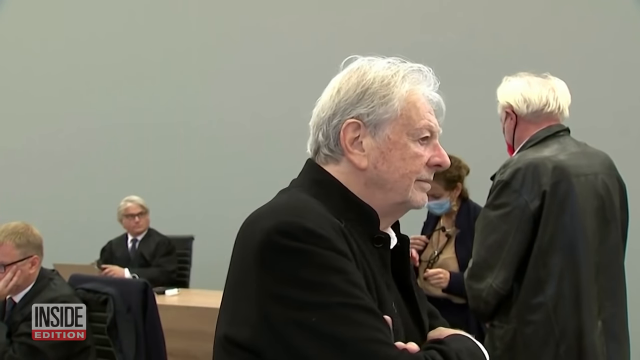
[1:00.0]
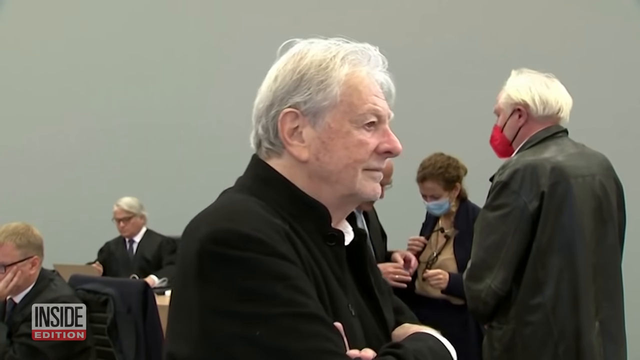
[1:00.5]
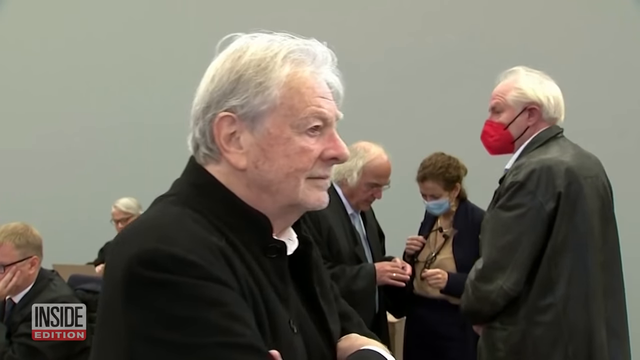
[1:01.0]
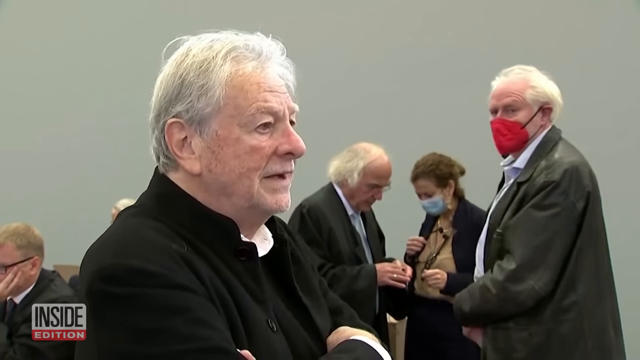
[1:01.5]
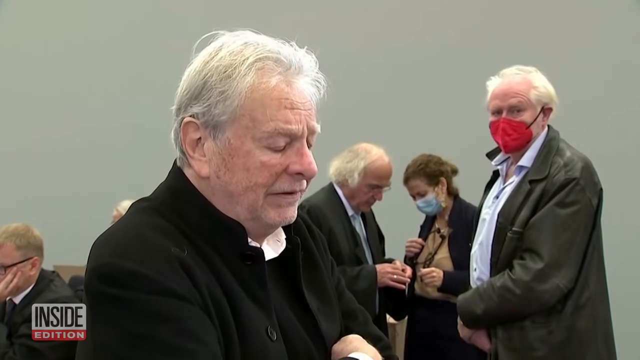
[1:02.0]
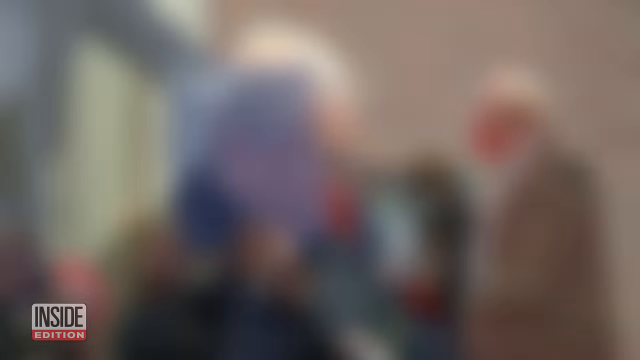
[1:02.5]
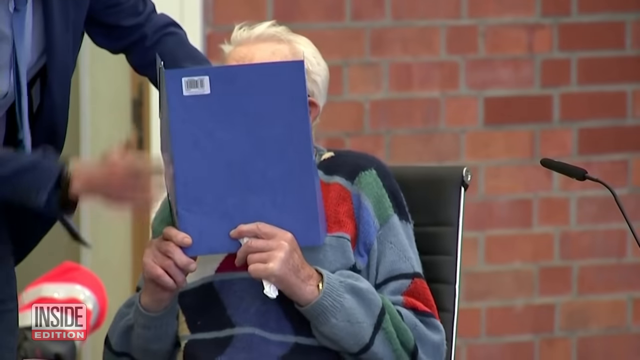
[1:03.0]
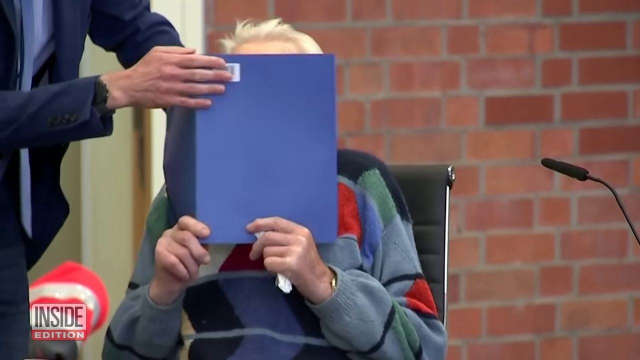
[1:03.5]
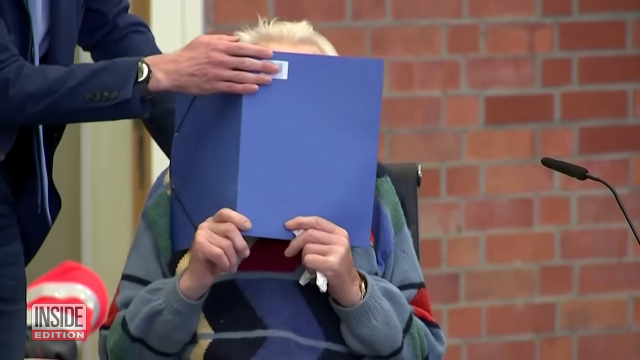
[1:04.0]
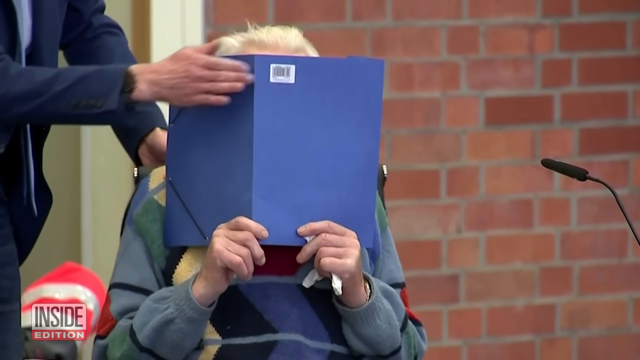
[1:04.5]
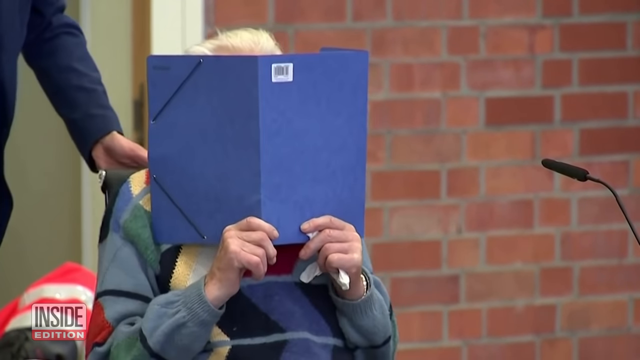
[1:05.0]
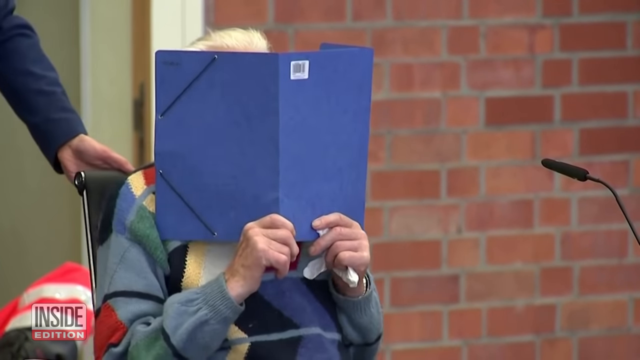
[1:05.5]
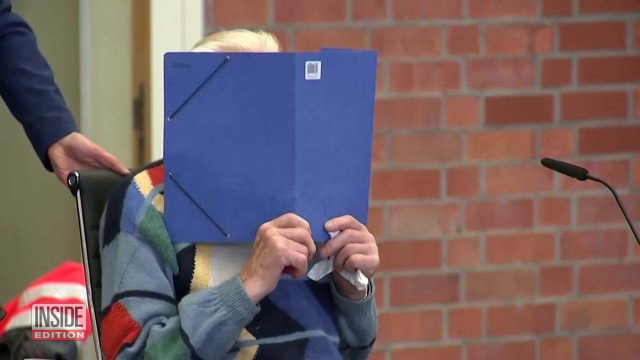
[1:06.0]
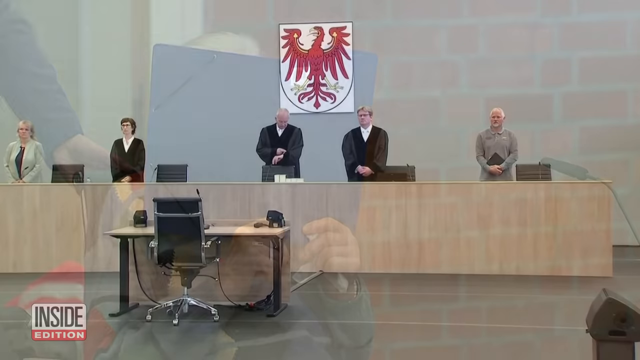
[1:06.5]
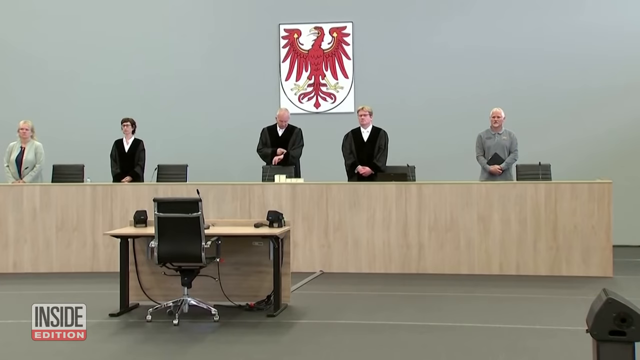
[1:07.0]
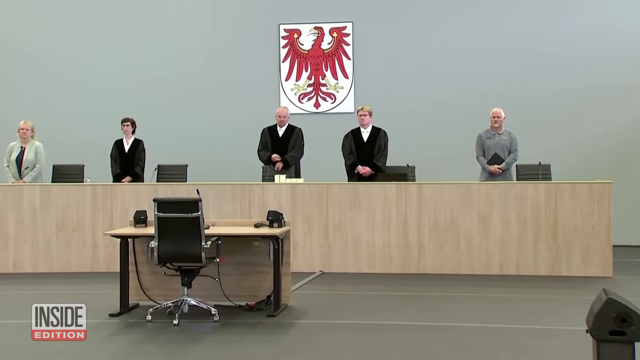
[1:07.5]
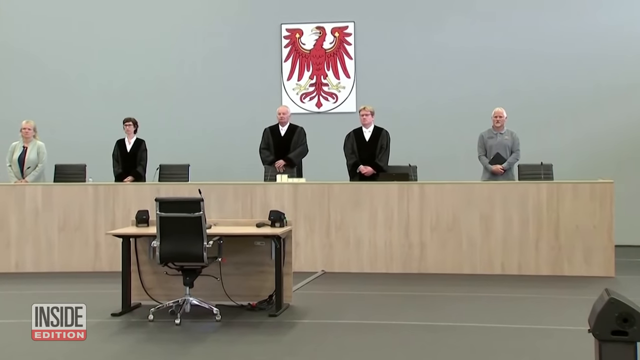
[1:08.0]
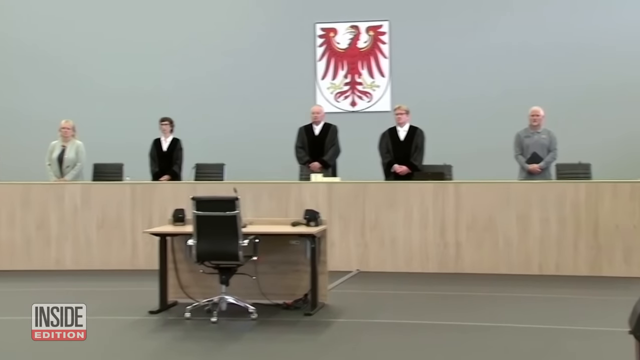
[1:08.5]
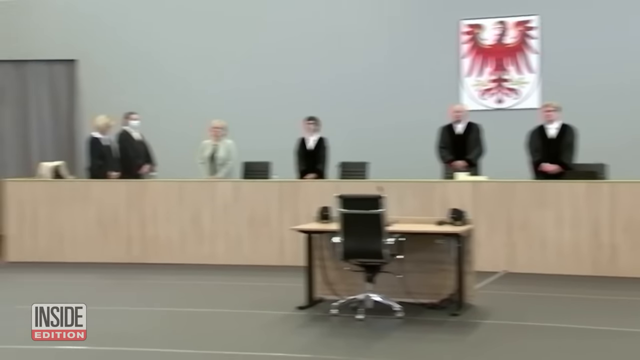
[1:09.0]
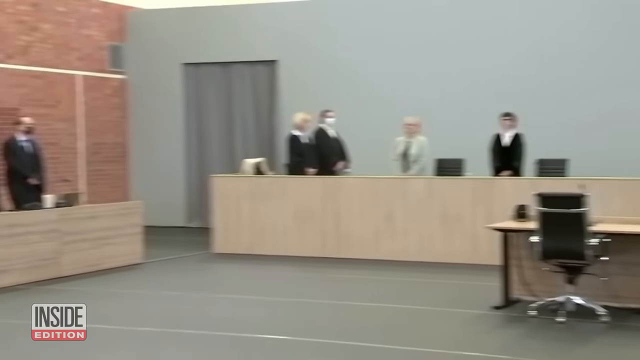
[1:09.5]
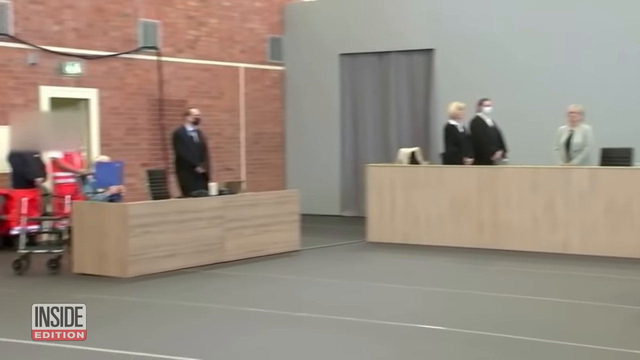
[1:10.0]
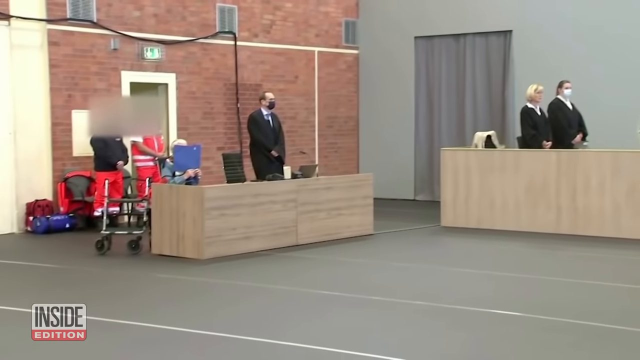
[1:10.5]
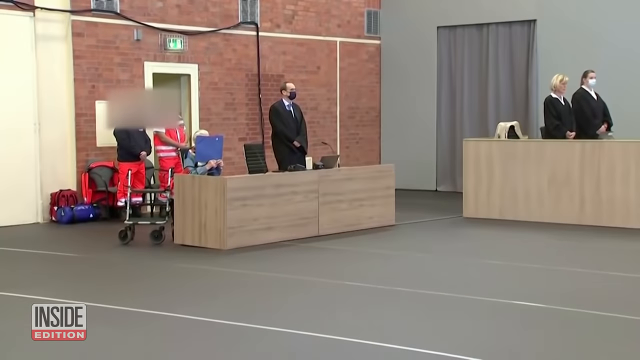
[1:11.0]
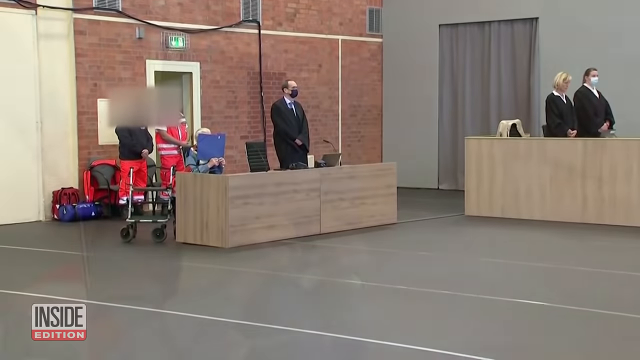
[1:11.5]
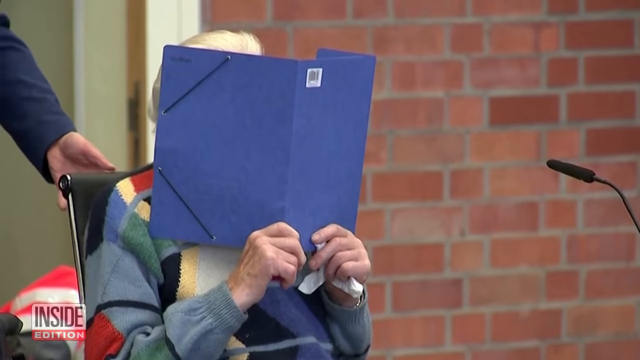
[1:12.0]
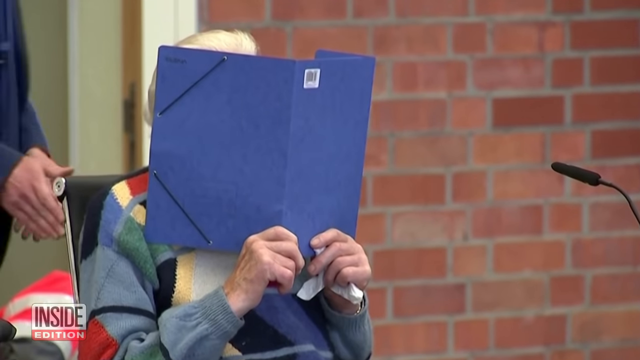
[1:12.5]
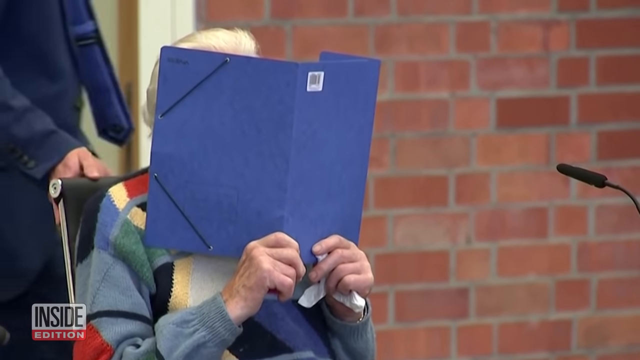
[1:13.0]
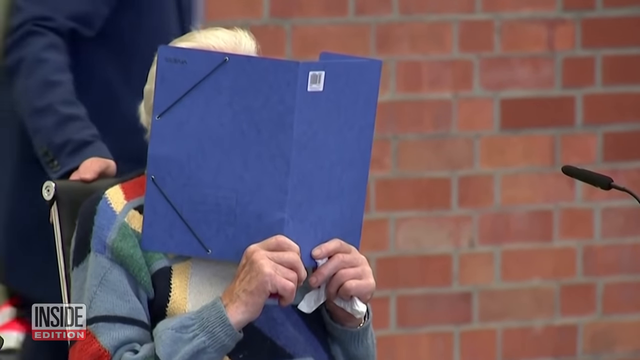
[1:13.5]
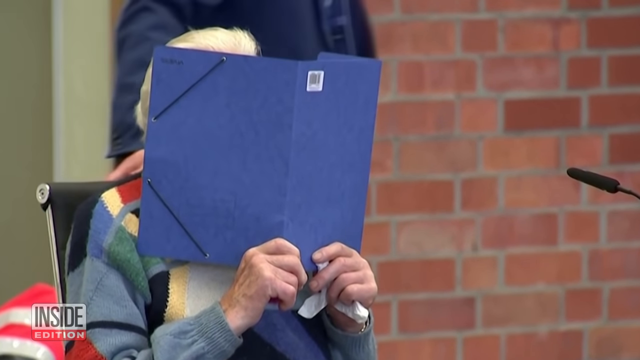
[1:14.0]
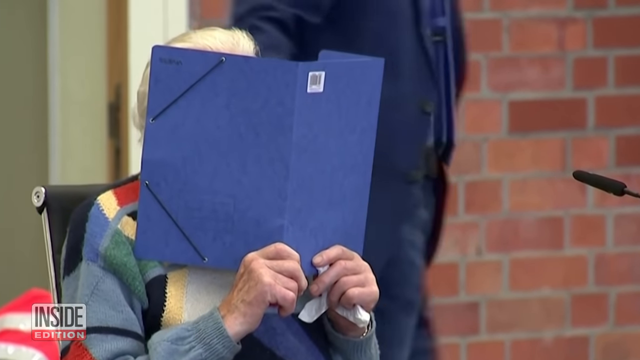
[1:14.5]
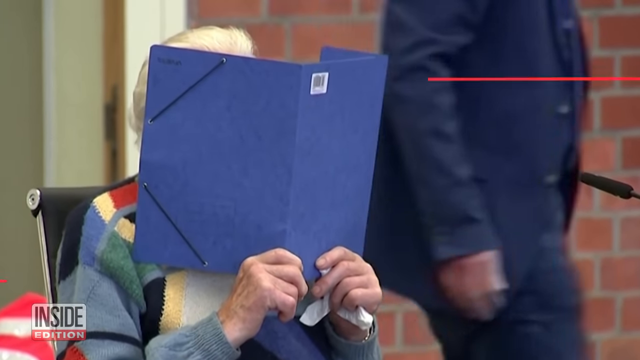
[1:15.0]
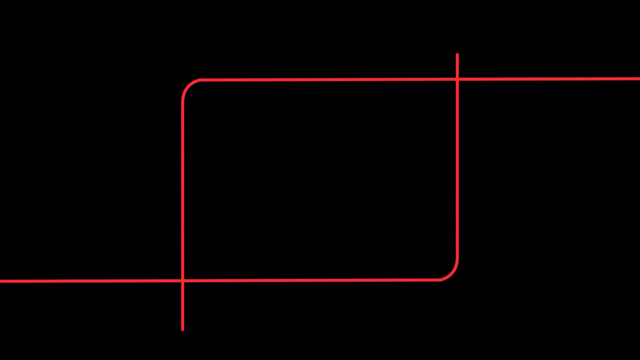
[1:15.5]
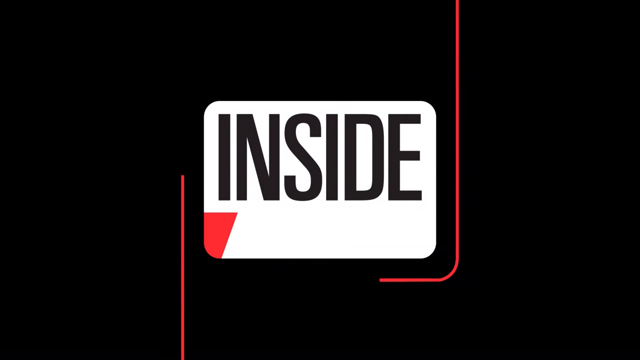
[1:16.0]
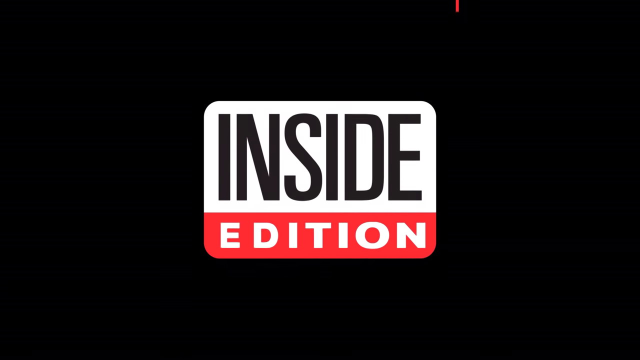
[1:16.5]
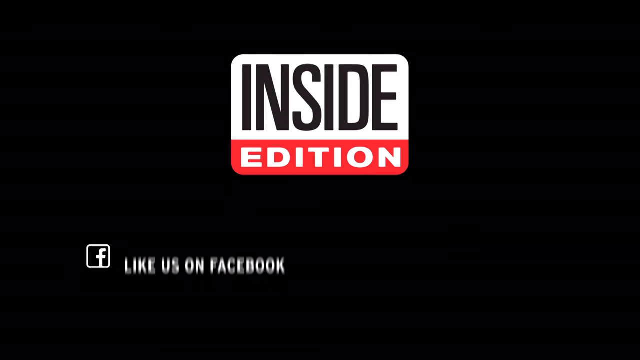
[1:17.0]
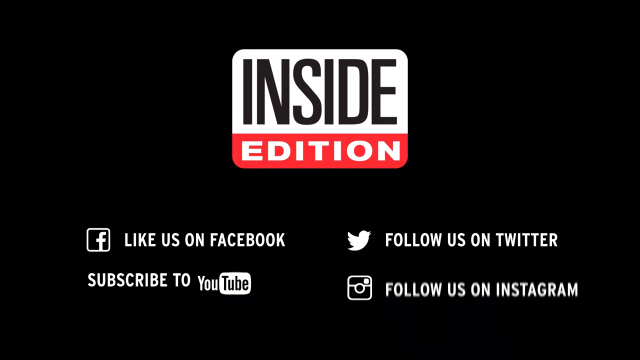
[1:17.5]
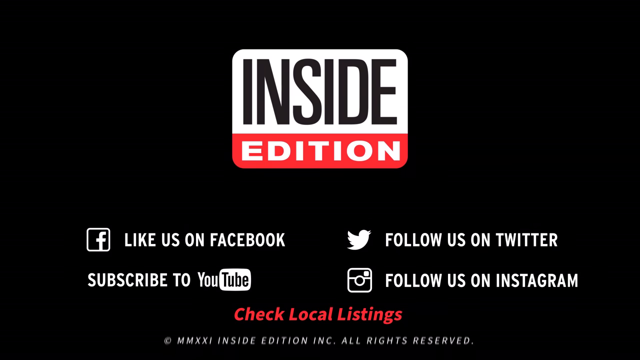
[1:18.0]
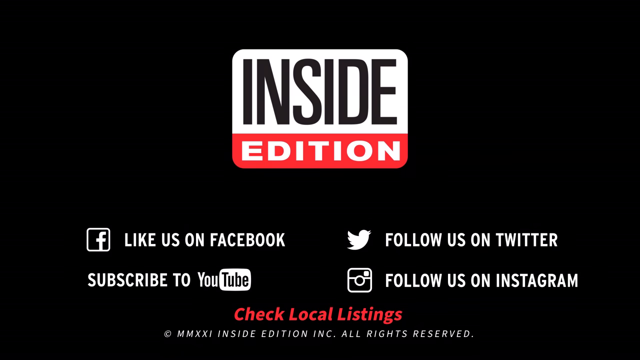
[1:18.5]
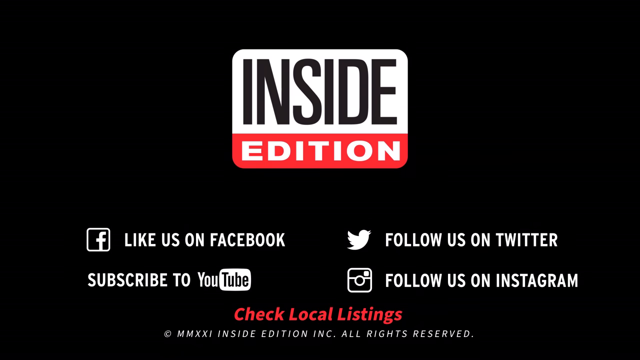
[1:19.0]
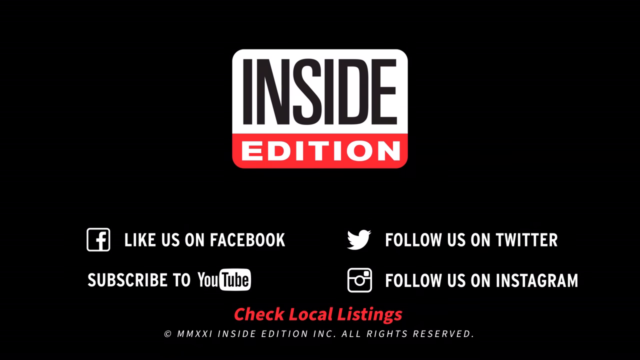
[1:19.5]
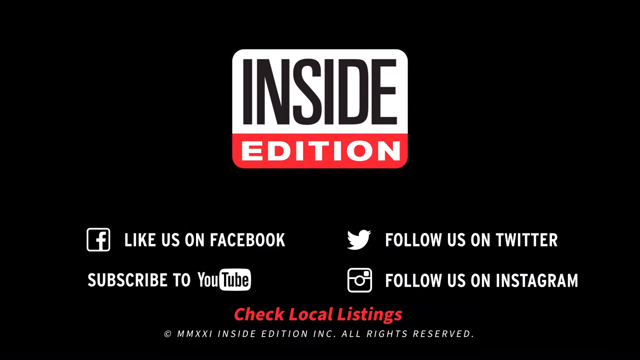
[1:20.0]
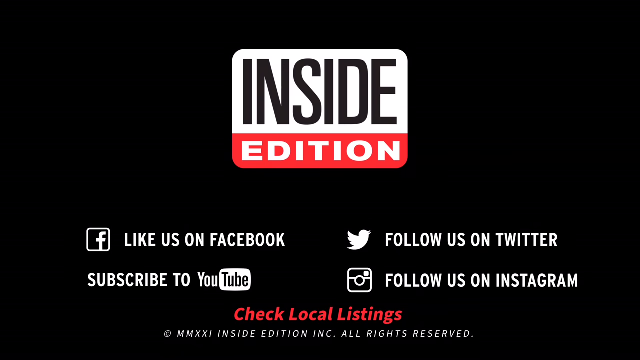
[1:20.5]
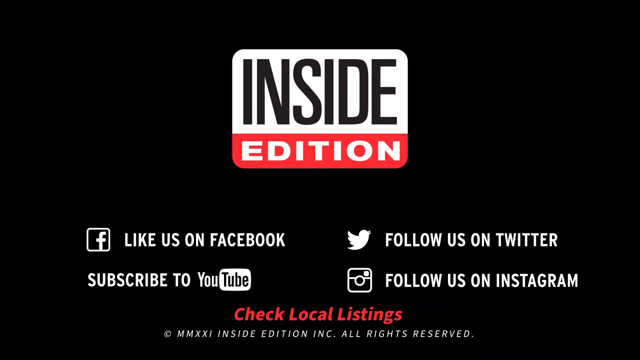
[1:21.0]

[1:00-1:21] An older man hides his identity by blocking his face with a blue folder. He has short but not shaved white hair and wears a gray sweater with red, blue, and green squares on it. Behind him is a brick wall, and he is sitting in a chair with a microphone in front of him. The camera zooms out to show the room, which looks similar to a gymnasium, with a smooth gray floor. The walls are each different: one is brick while another is gray. Desks or tables are behind plain wooden boxes; the tables have microphones on them and appear to be set up for speakers. They line the room, leaving an open space in the center, as if to allow people to approach those at the tables.